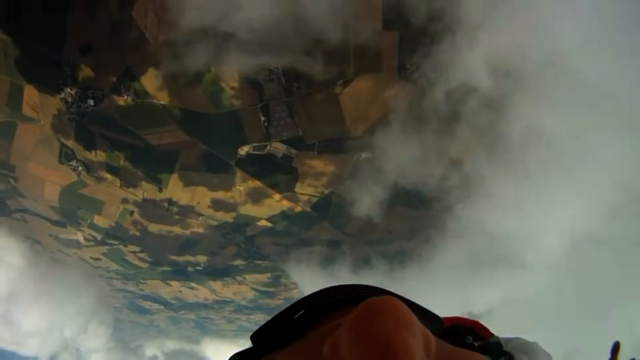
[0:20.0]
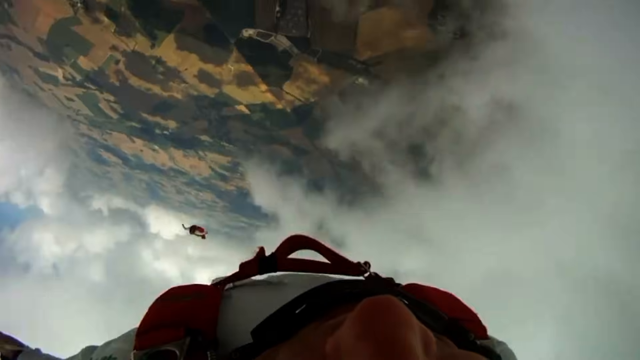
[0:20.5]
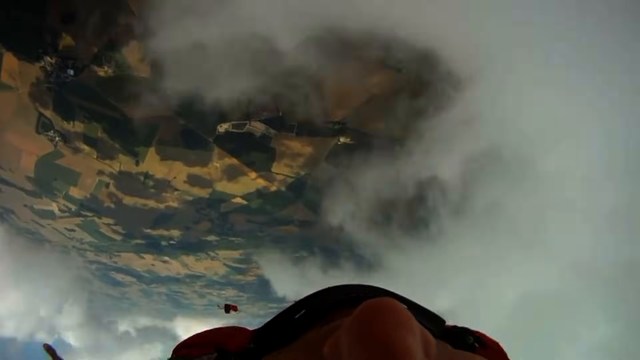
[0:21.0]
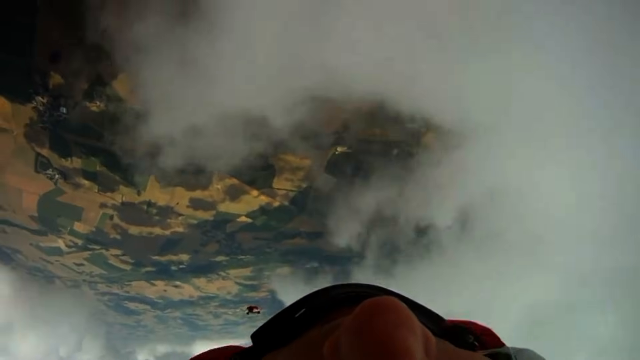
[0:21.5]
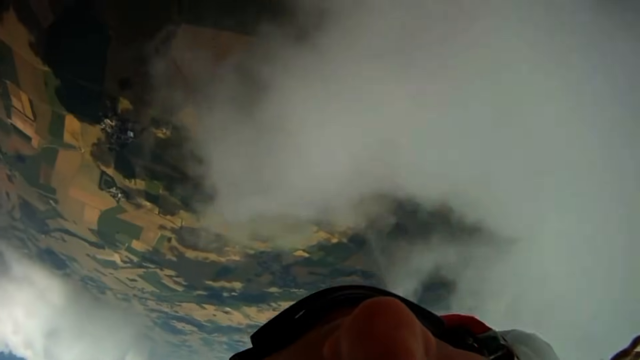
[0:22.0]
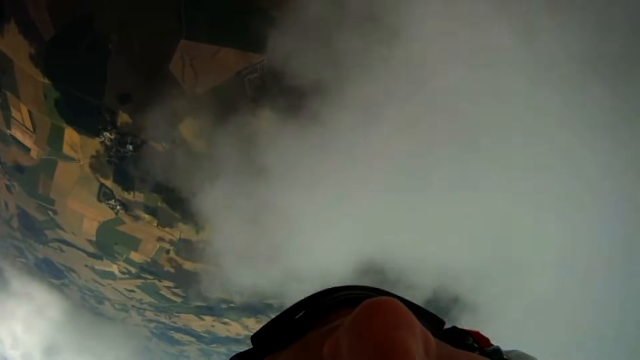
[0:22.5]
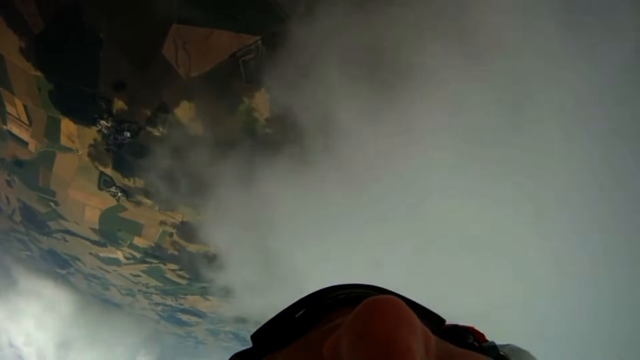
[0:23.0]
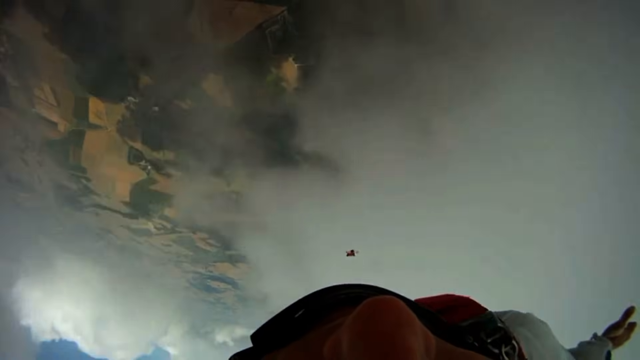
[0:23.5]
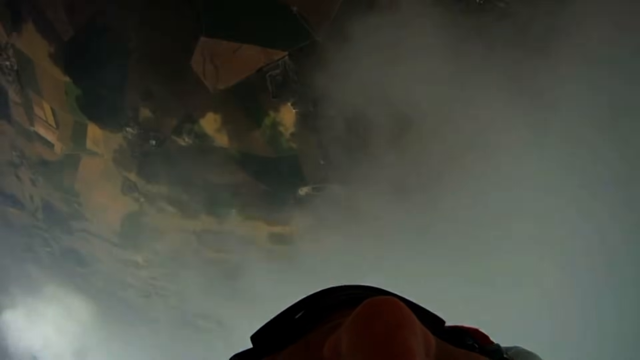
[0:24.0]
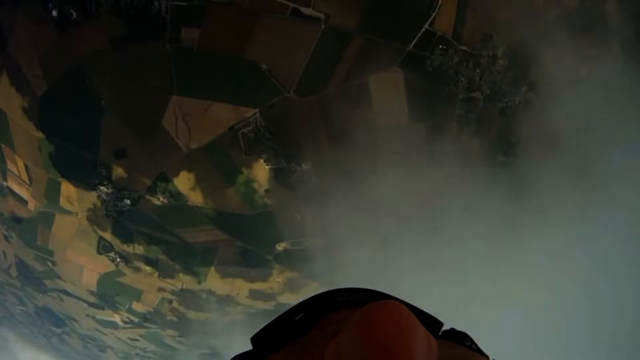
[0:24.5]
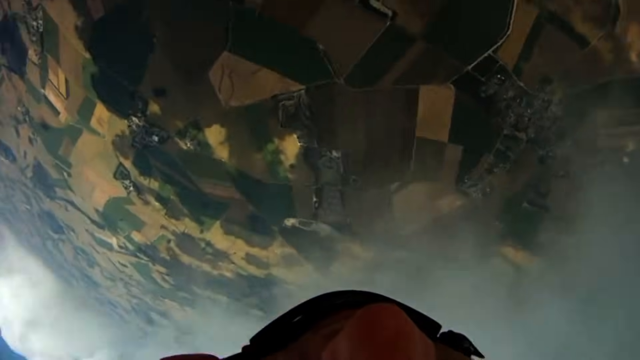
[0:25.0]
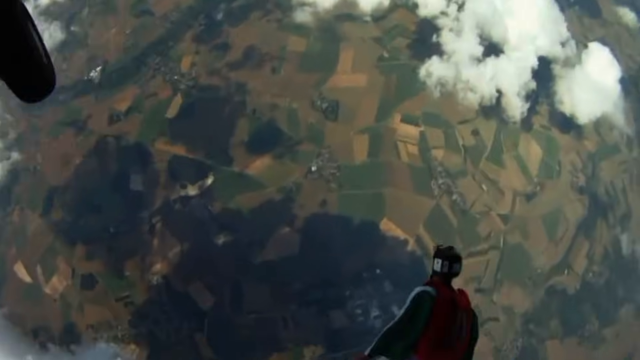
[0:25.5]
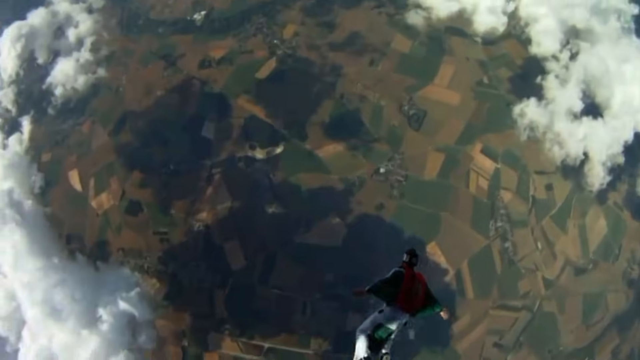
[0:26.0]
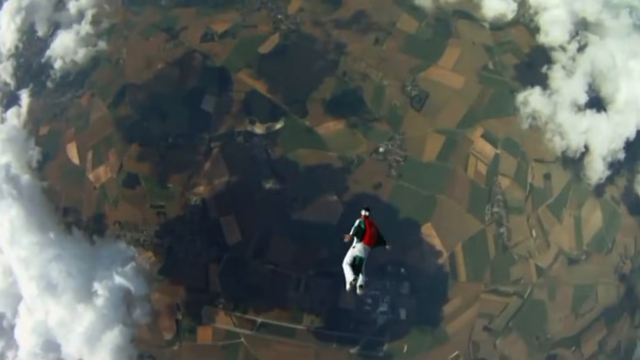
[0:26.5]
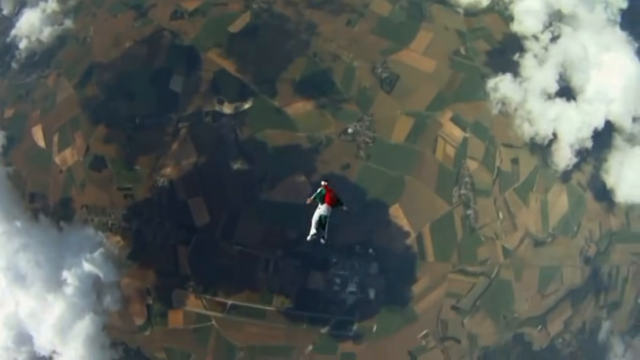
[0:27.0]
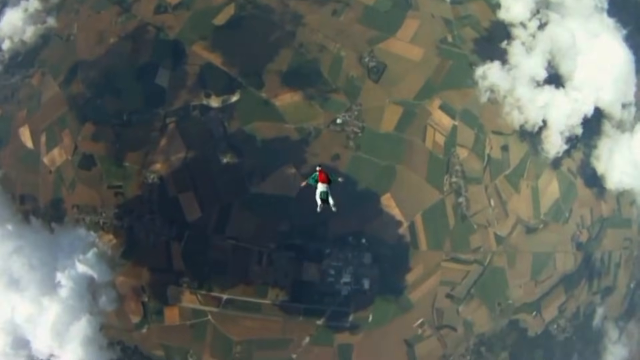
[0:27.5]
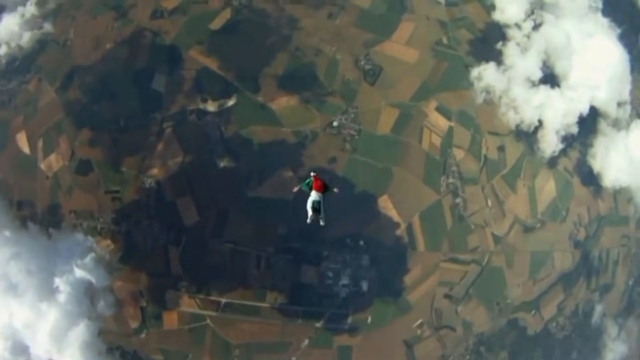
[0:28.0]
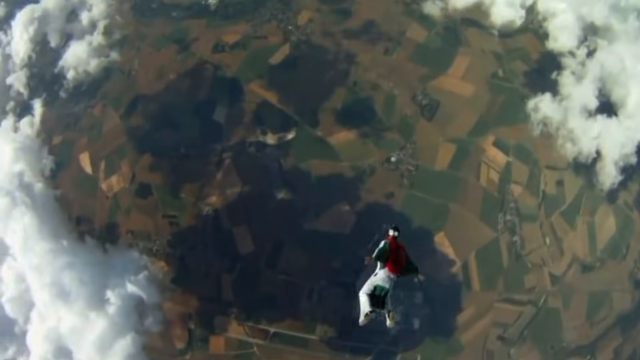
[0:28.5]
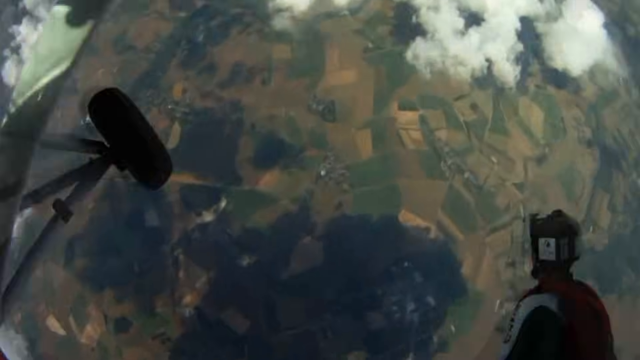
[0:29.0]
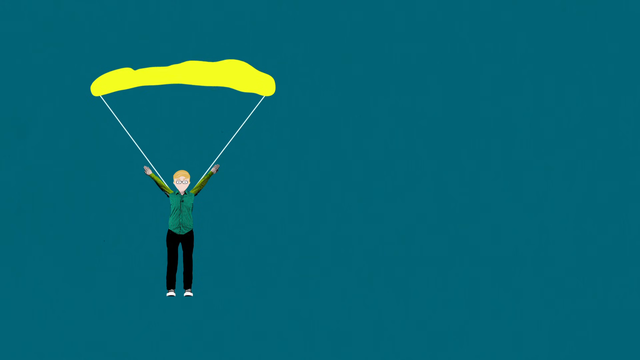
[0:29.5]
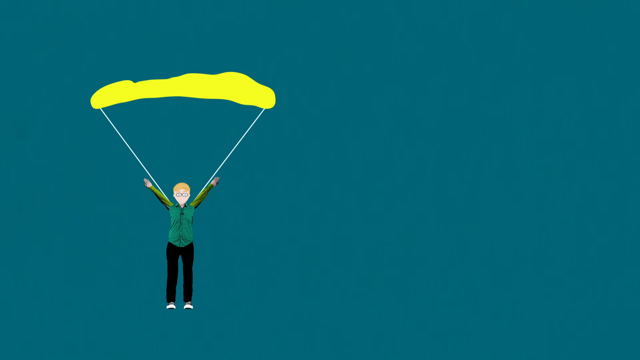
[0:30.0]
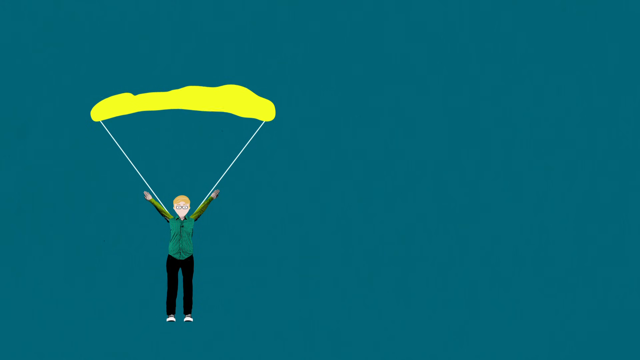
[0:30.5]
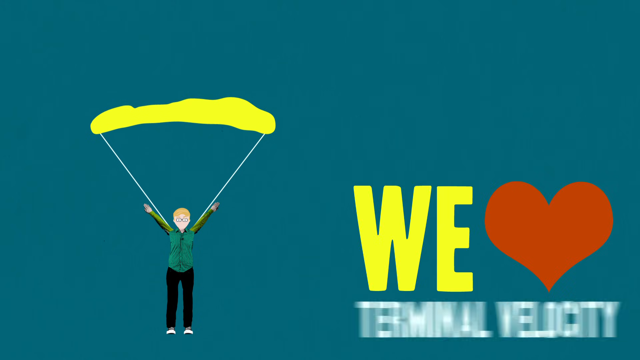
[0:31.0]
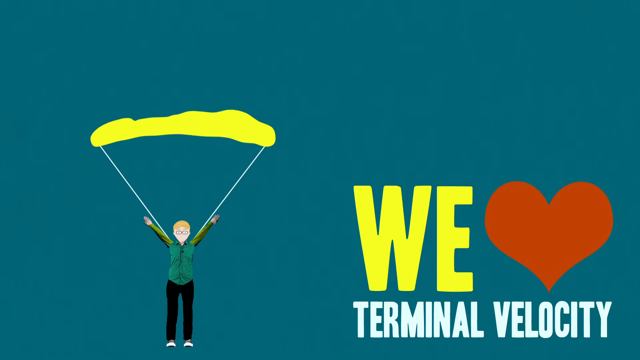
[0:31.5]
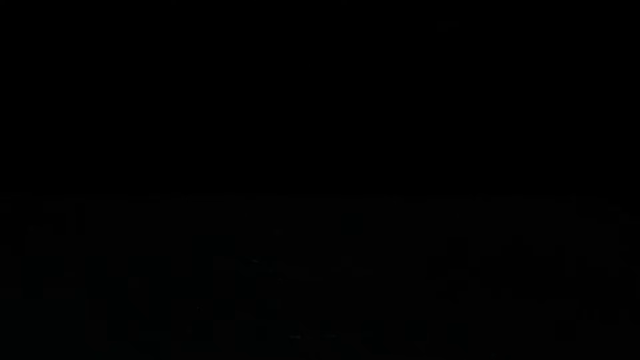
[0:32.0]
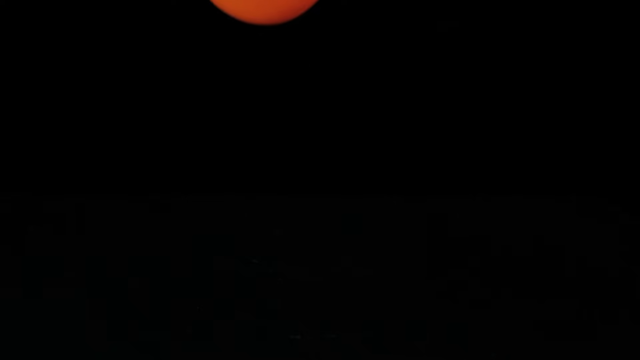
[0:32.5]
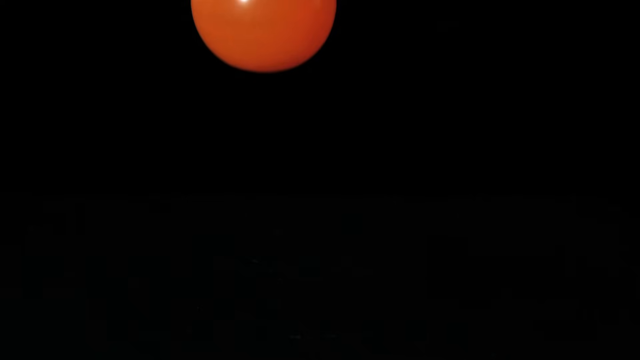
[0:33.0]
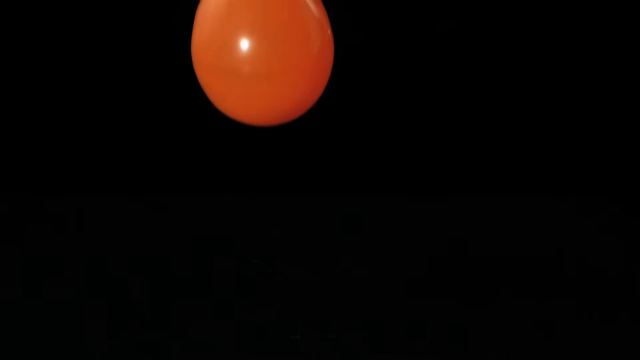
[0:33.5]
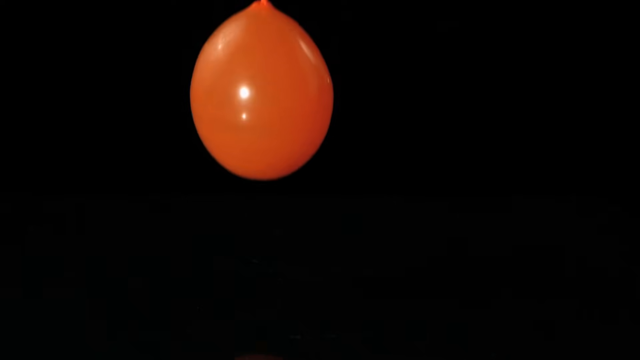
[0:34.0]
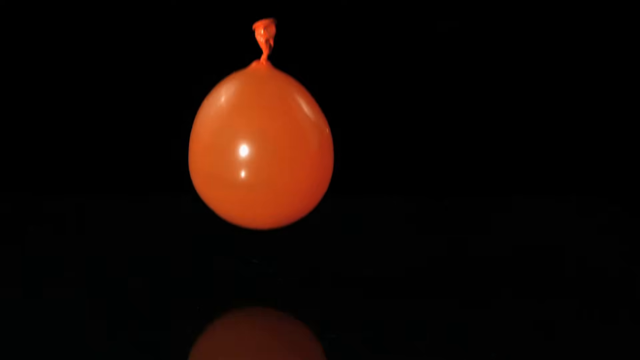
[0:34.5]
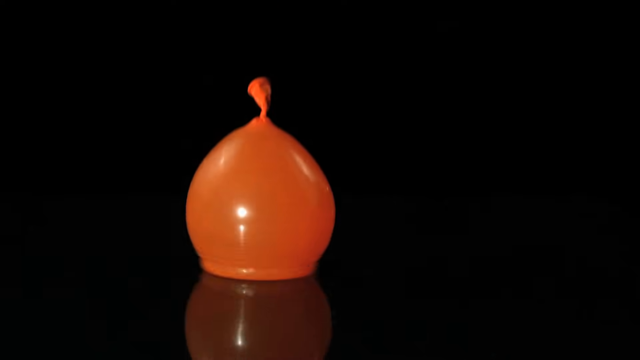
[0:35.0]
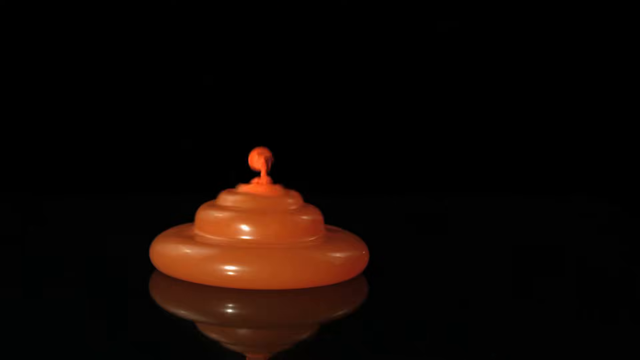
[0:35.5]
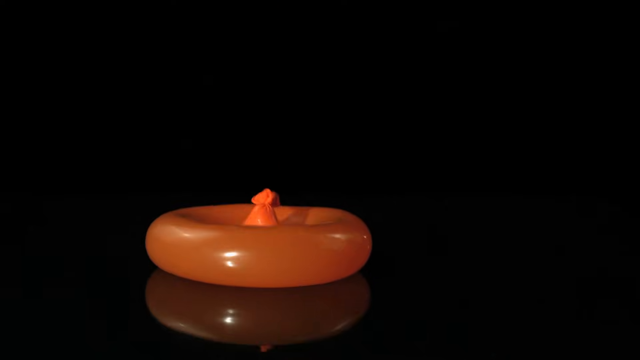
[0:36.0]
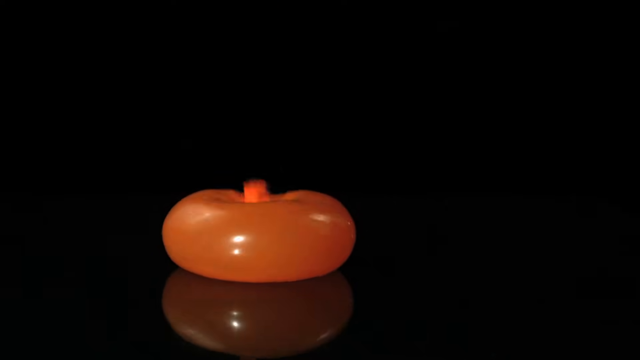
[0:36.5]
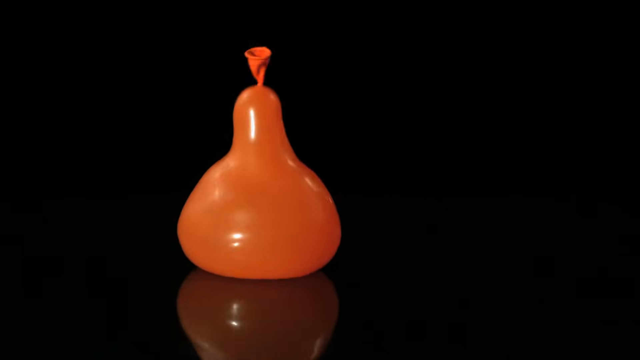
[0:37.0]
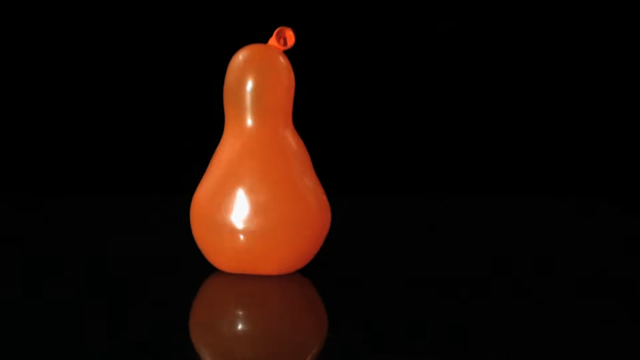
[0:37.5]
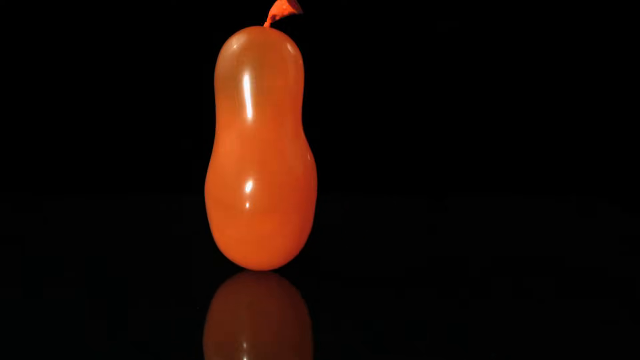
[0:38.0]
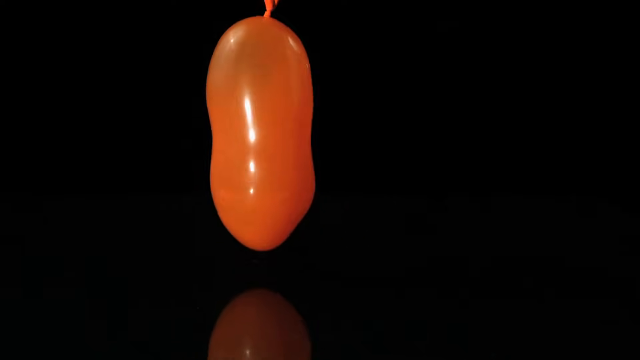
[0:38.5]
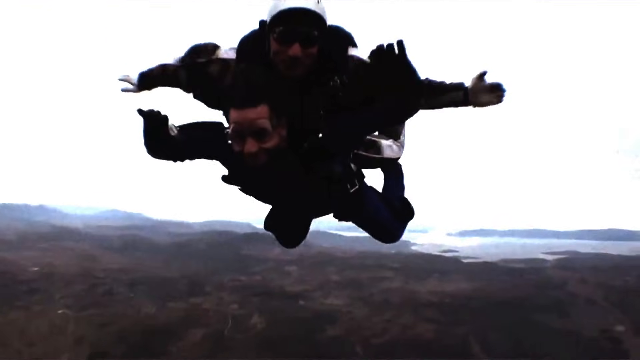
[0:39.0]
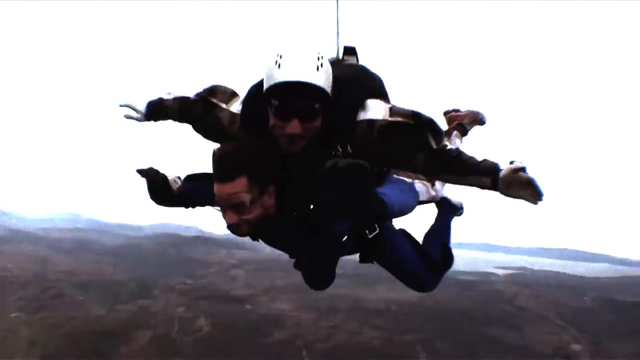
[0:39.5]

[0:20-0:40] Various footage shows skydivers in mid-jump. Some of it appears to be almost first-person video, apparently from a skydiver's helmet, with the person's nose visible as they look down toward the ground. Clouds are underneath them, and below are brown, tan and green blocks of landmass seen from very far away. A skydiver in white with a red parachute on their back is below, flying with their arms out. The scene then transitions to a kind of teal background with a cartoon of a person parachuting: the parachute is yellow, with two white strings attached to the back of the character, who wears a green shirt and black pants. Bold text off to the side reads "We ♥ Terminal Velocity," with the heart shown as a heart emoticon rather than the word. Next, an orange balloon falls and hits the ground, with a kind of rippling effect on impact.